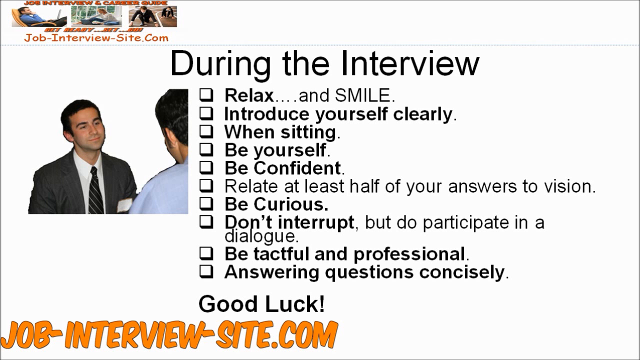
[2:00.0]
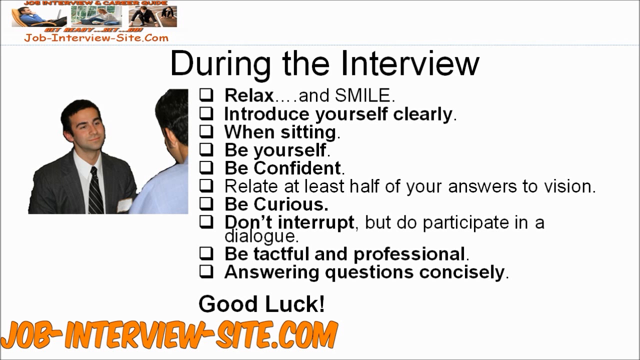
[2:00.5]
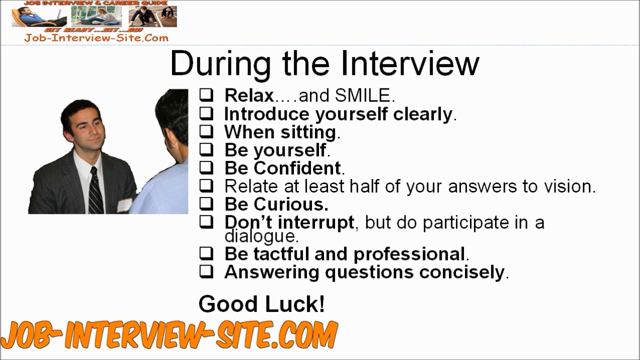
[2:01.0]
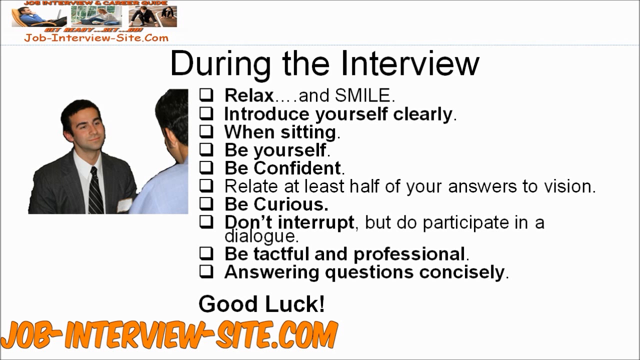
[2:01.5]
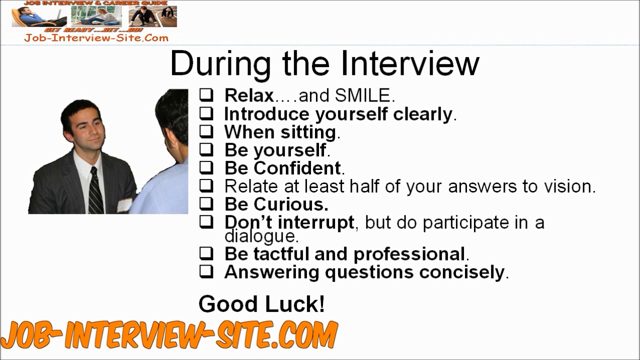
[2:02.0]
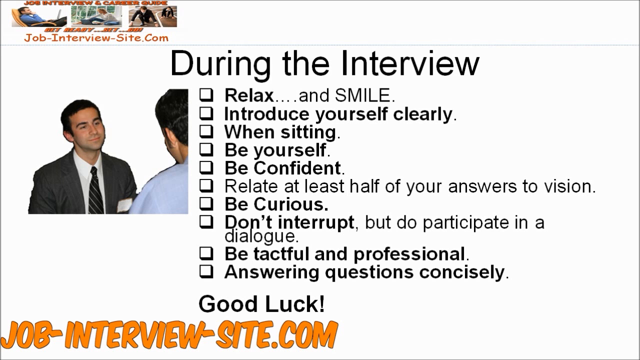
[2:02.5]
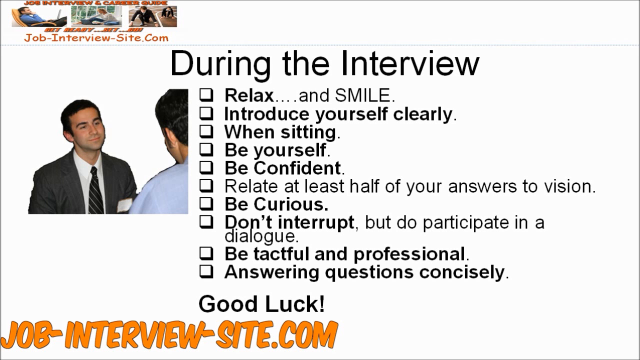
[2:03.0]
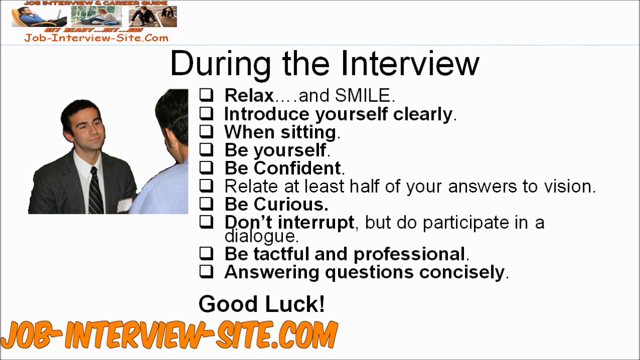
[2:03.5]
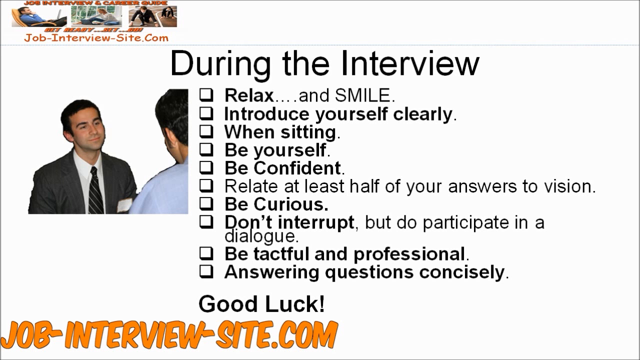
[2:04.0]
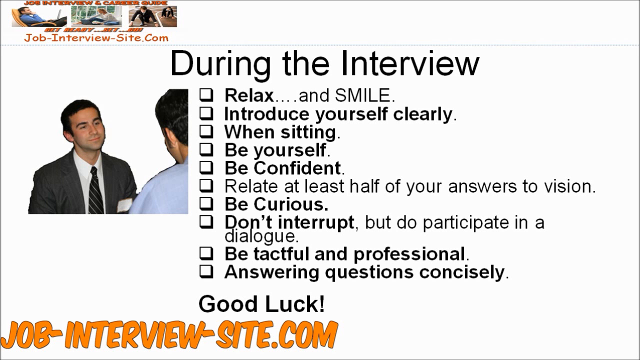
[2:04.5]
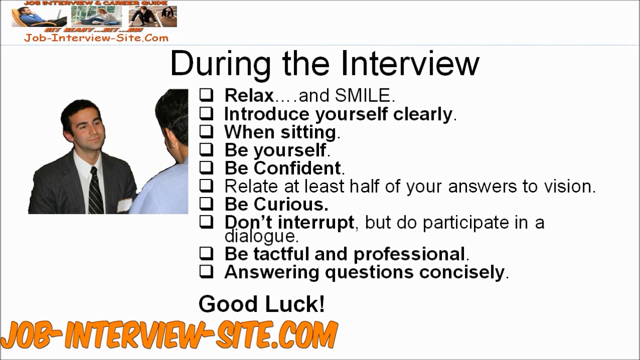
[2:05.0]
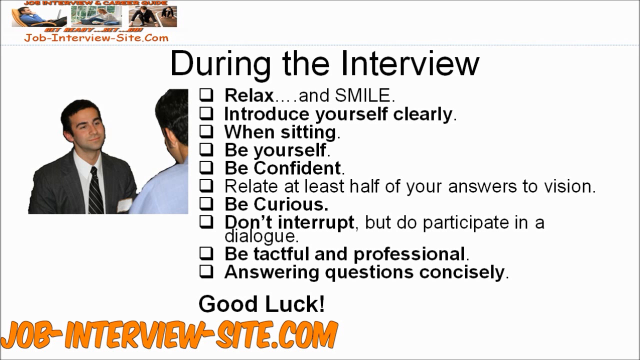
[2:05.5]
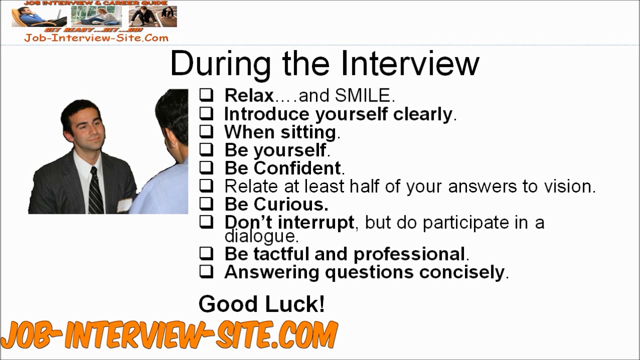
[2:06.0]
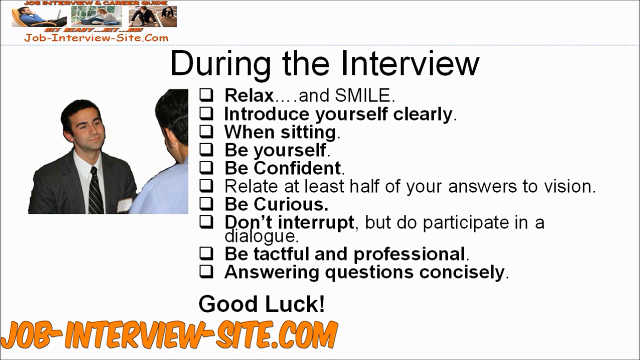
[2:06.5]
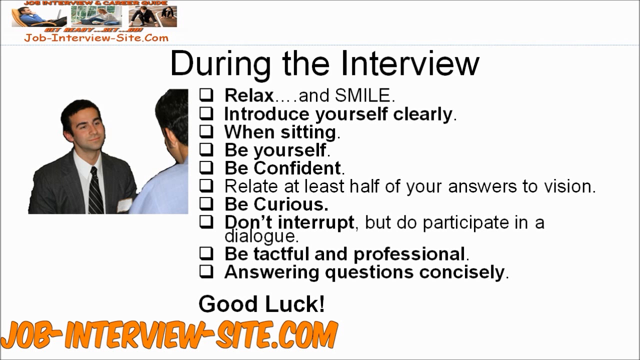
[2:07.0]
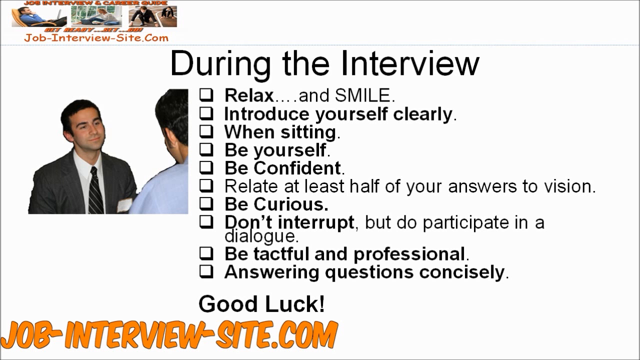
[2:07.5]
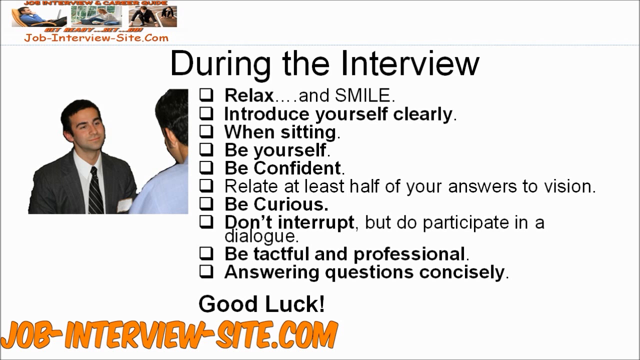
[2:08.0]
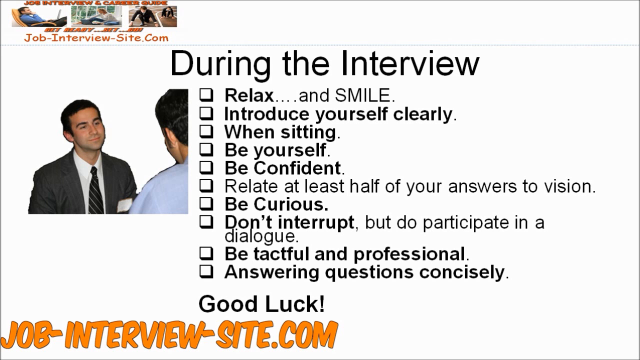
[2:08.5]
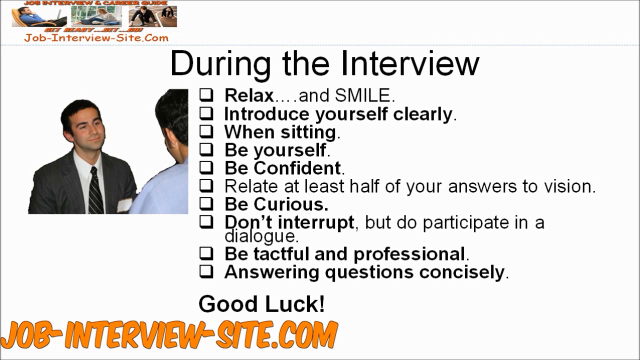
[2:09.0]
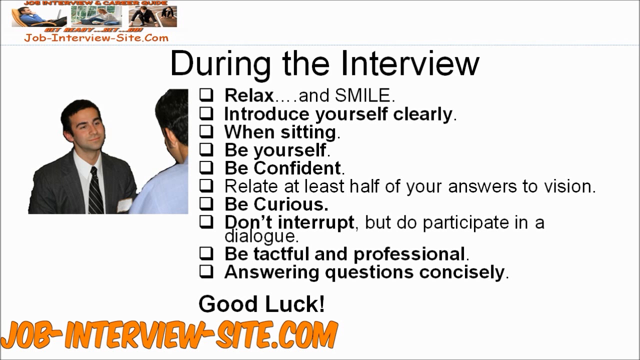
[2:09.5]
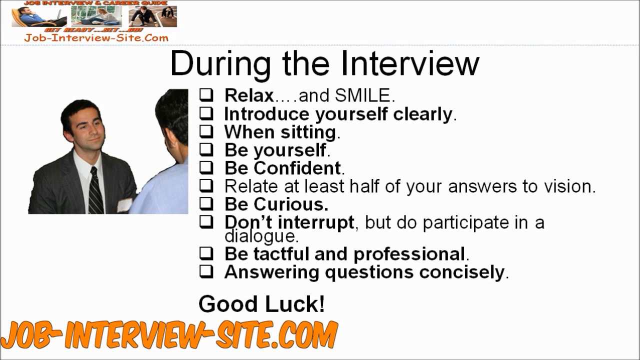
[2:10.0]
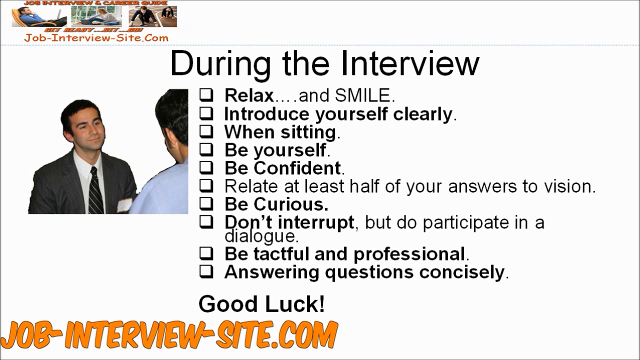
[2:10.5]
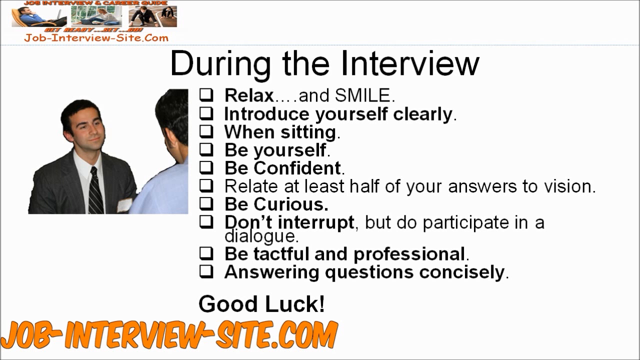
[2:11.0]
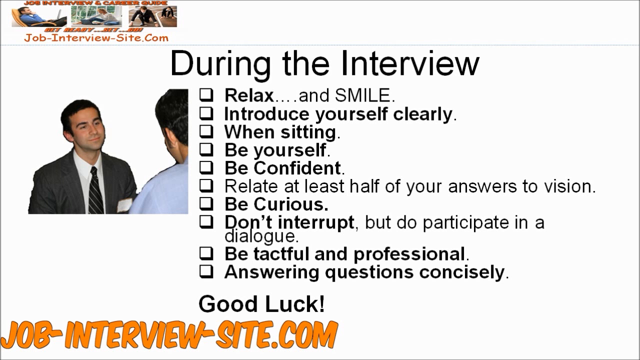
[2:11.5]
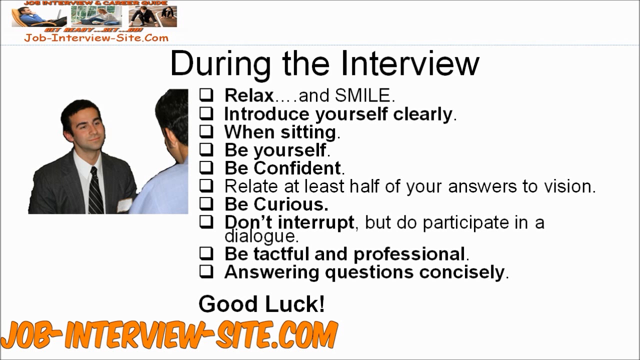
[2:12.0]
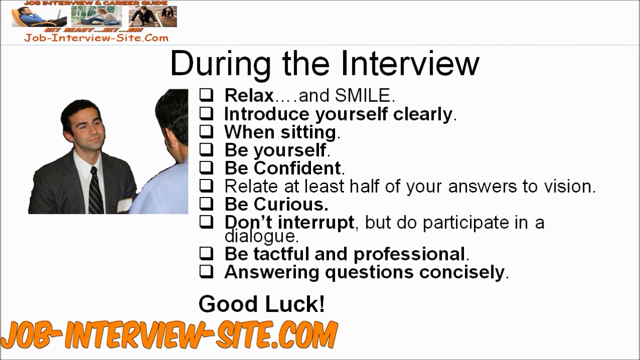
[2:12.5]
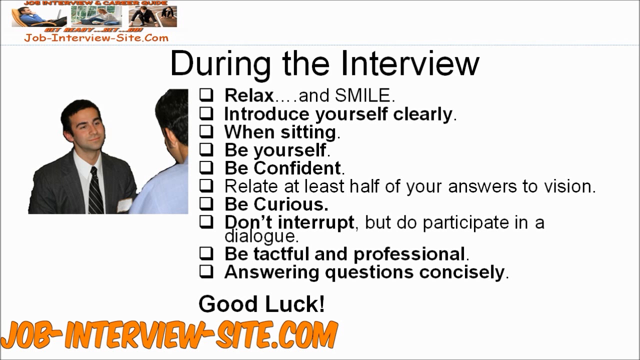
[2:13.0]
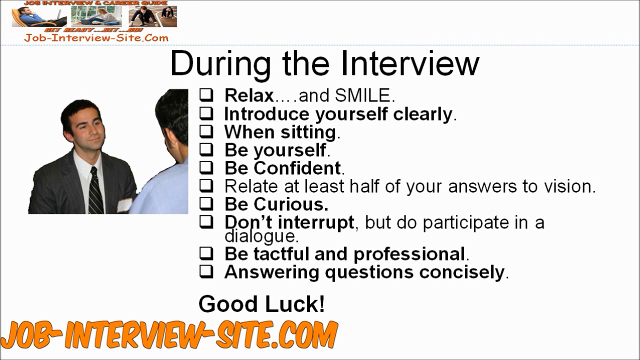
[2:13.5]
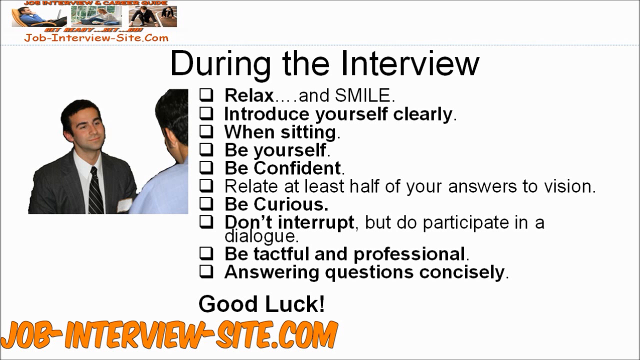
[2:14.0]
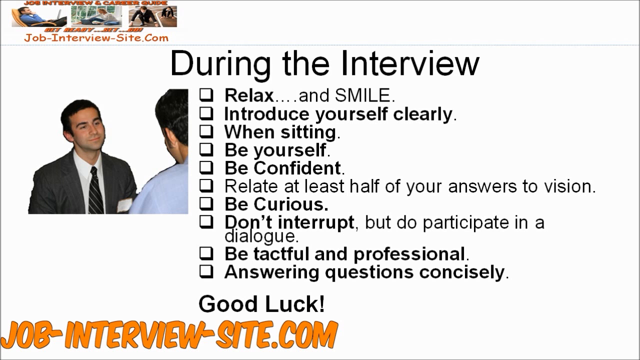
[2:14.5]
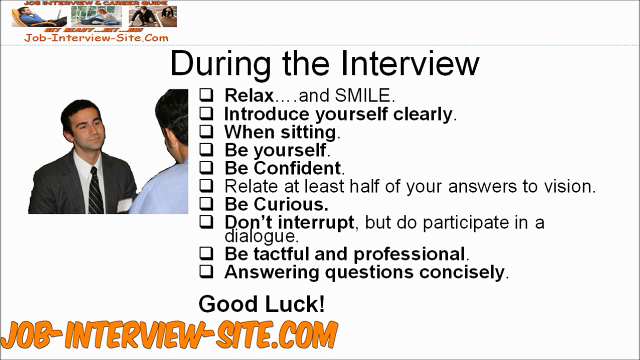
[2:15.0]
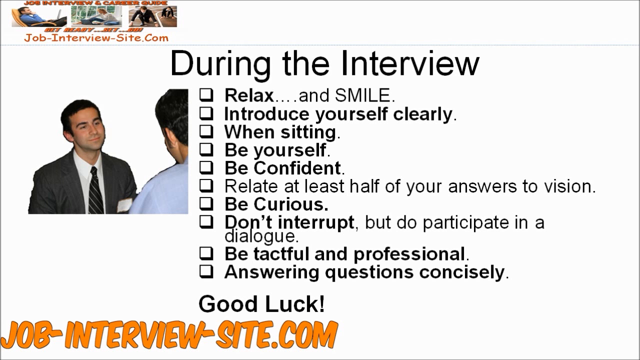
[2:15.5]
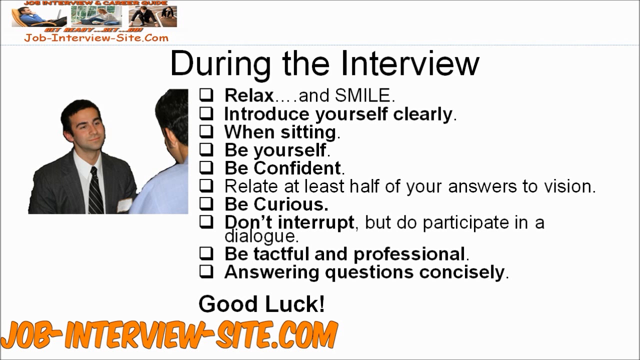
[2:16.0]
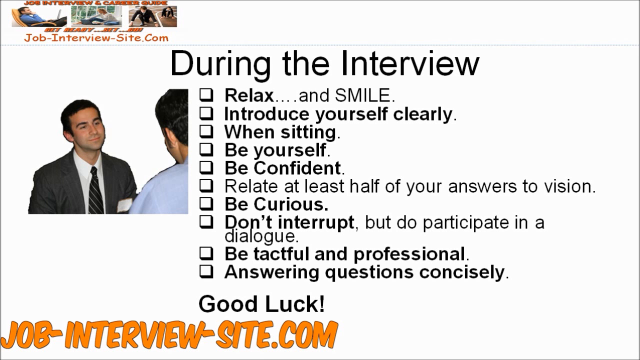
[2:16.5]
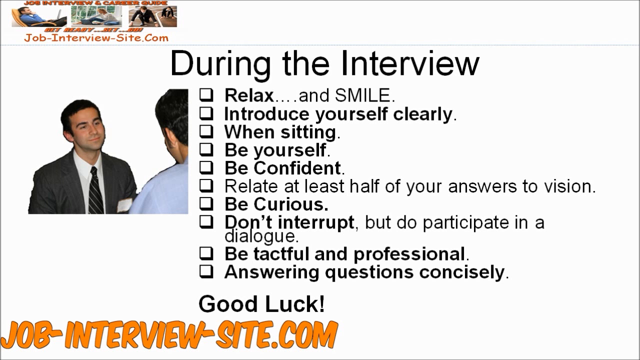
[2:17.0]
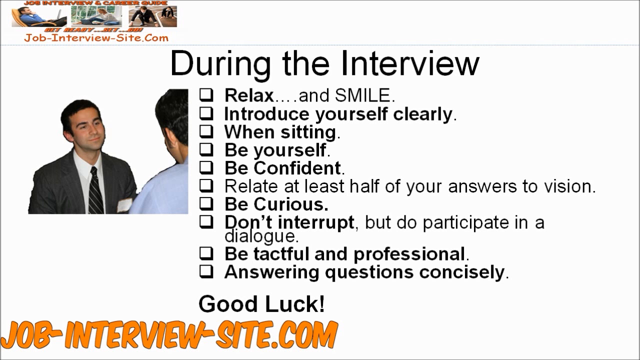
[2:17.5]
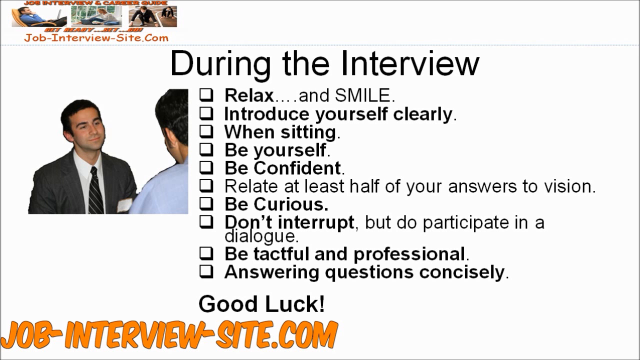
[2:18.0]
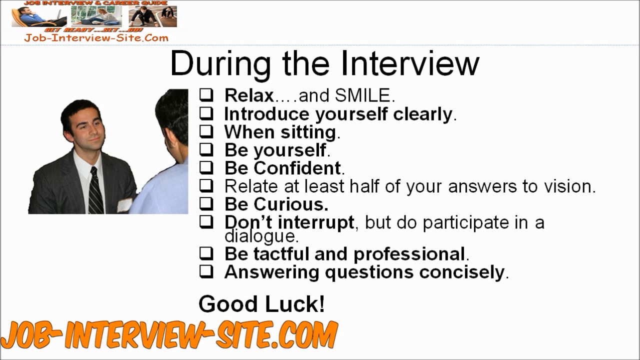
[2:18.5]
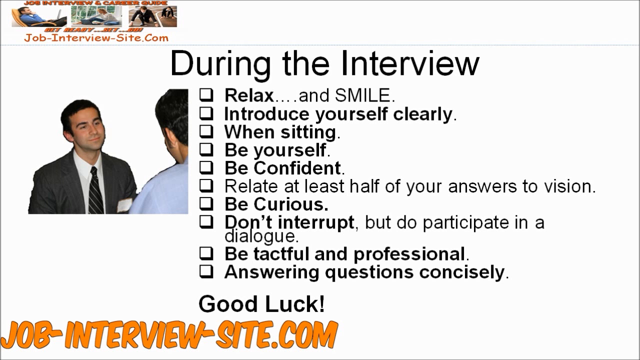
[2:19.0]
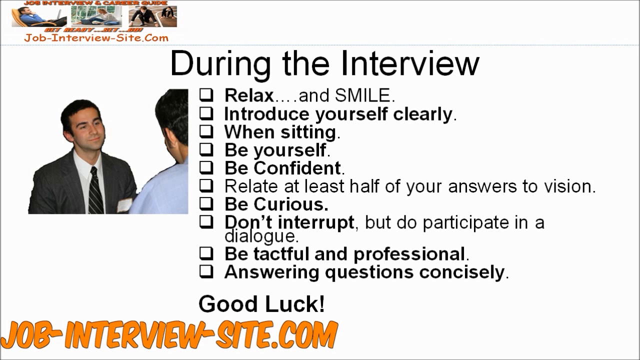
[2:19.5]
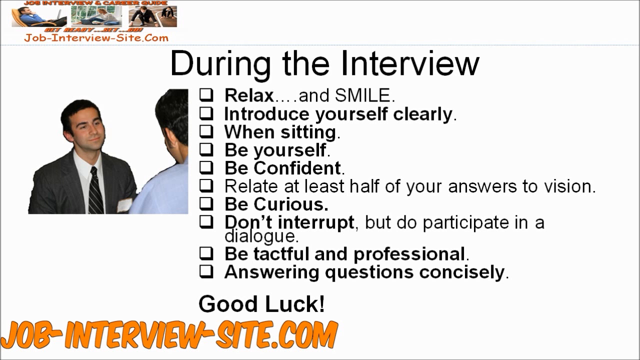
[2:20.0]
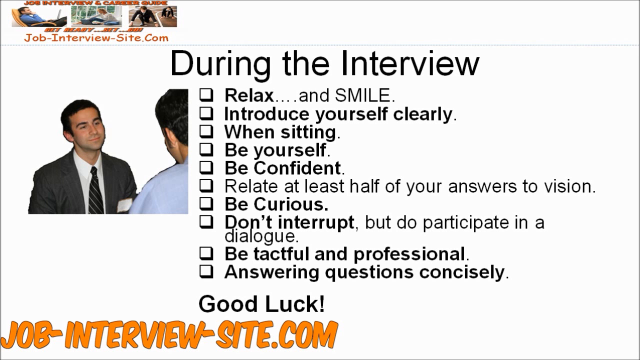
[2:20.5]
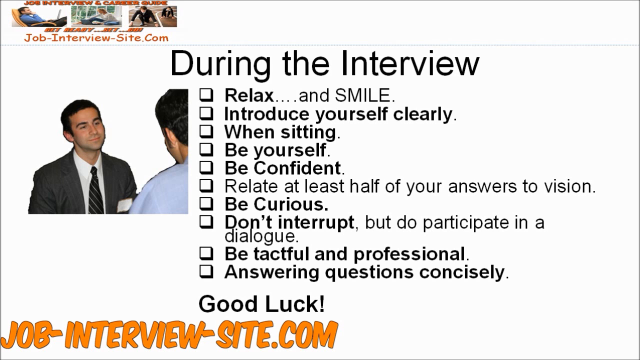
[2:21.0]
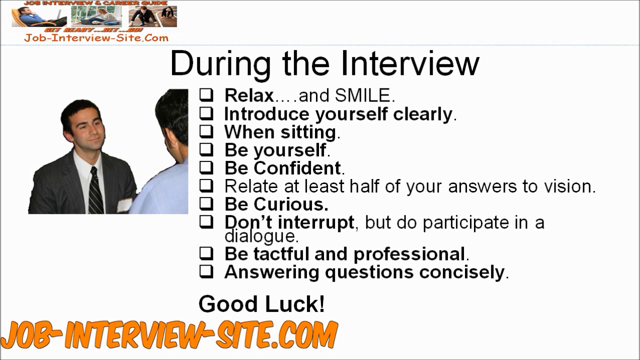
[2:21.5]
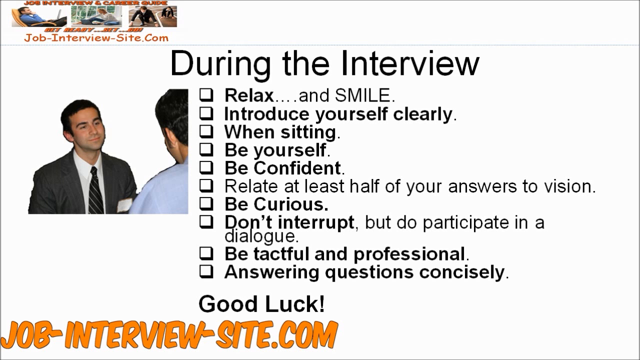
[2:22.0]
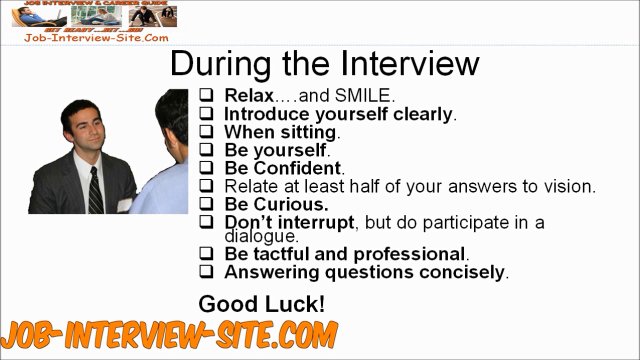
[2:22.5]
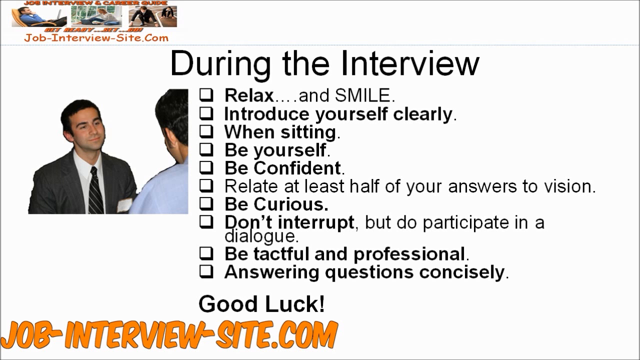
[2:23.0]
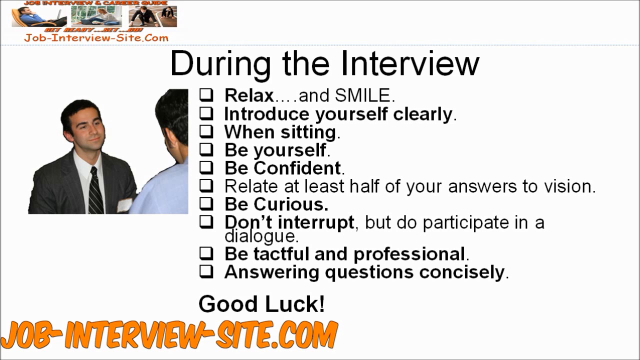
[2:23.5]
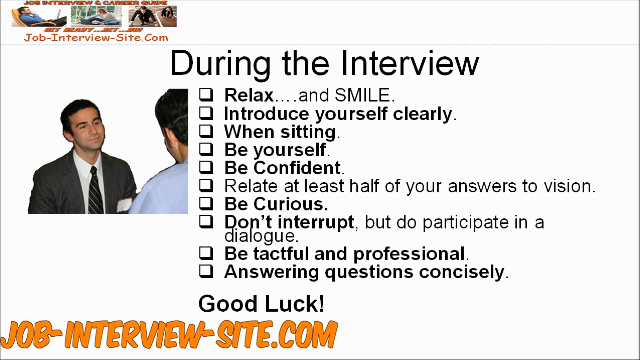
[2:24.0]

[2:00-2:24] The bullet points remain on screen until the video ends. The man in the image on the left, the person being interviewed, has a slightly smug expression and almost looks melancholy, sort of not quite in the moment.